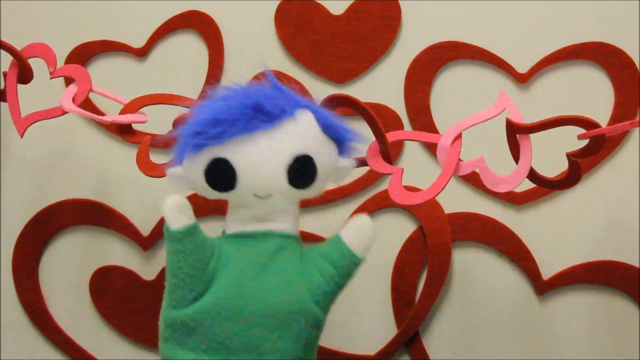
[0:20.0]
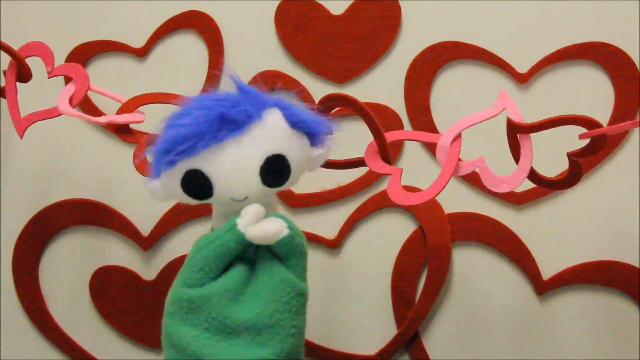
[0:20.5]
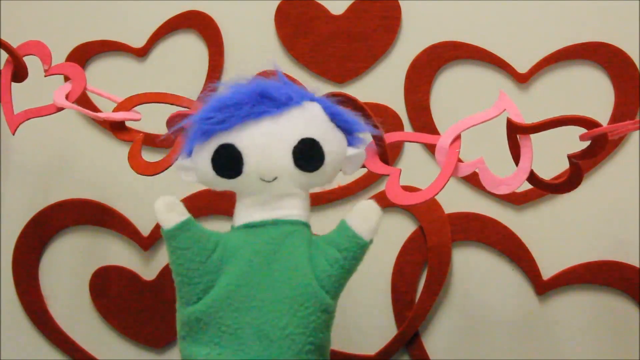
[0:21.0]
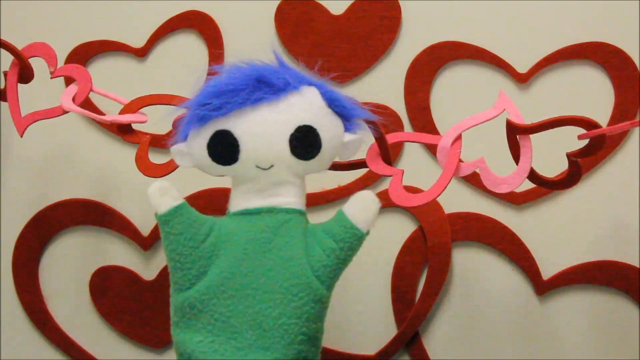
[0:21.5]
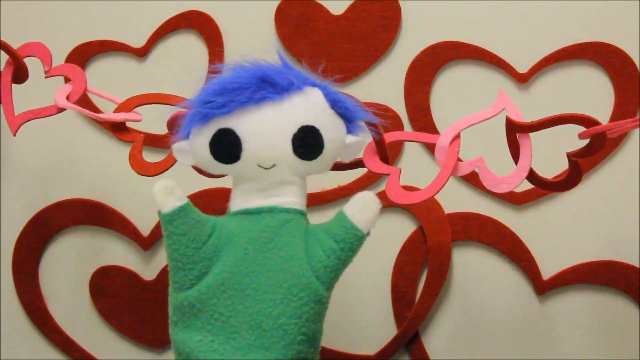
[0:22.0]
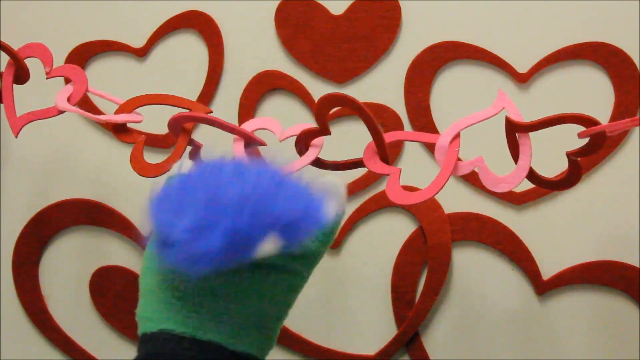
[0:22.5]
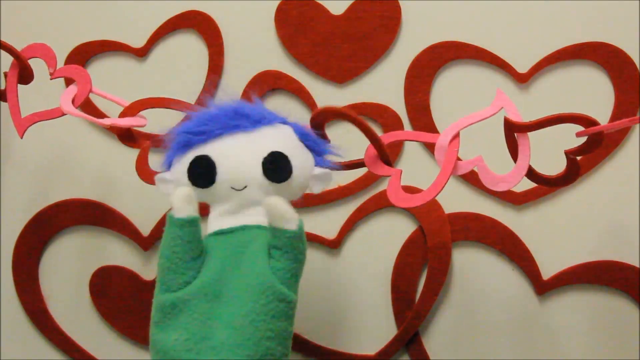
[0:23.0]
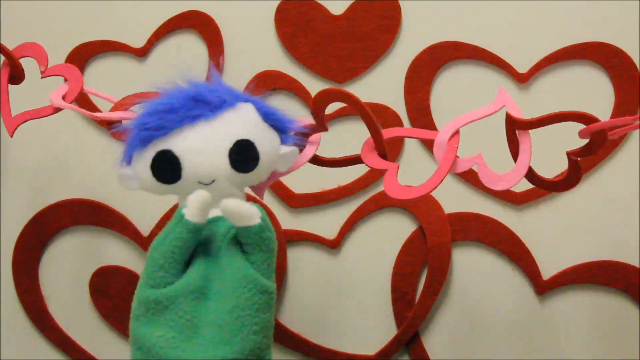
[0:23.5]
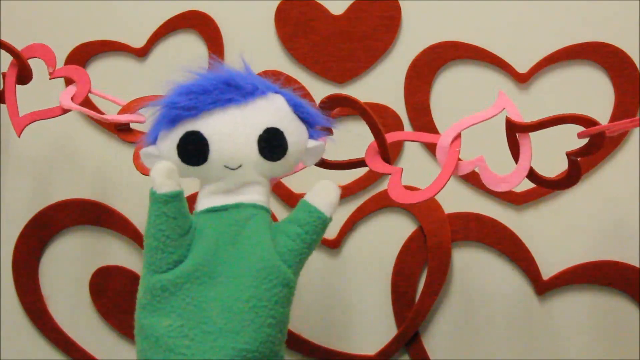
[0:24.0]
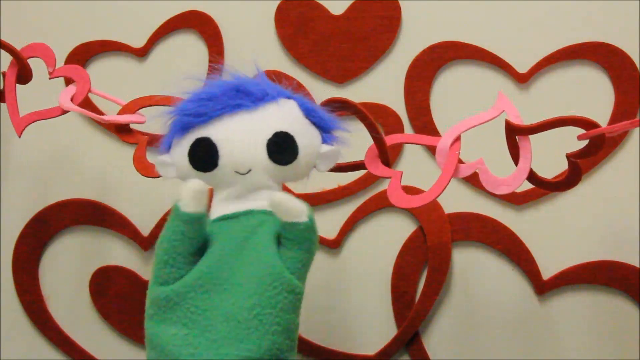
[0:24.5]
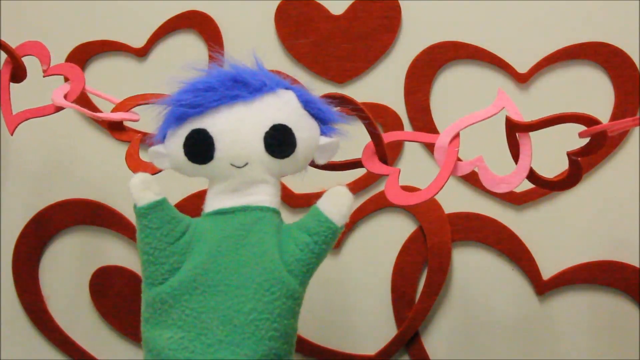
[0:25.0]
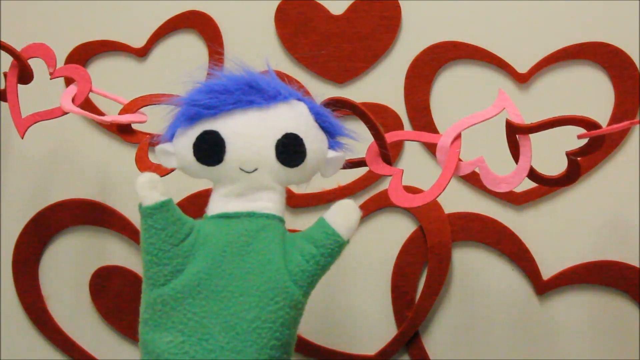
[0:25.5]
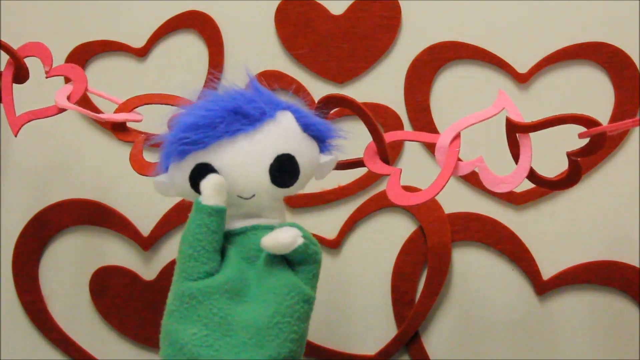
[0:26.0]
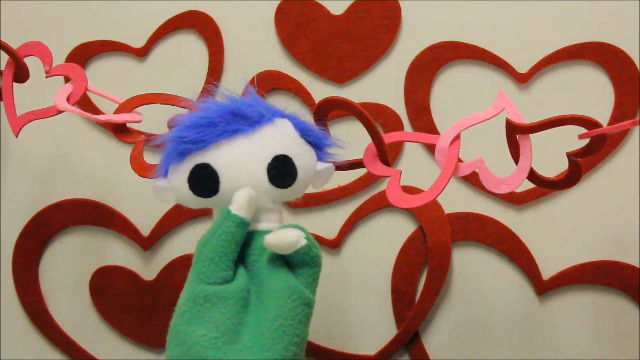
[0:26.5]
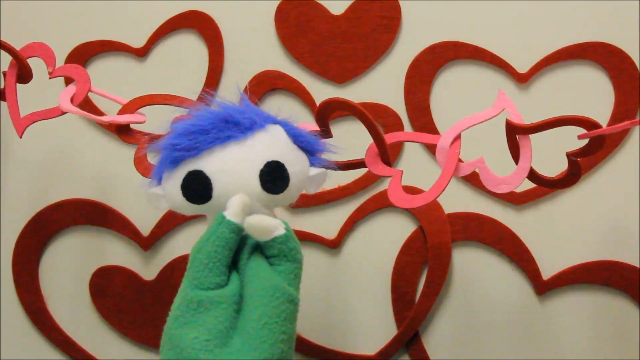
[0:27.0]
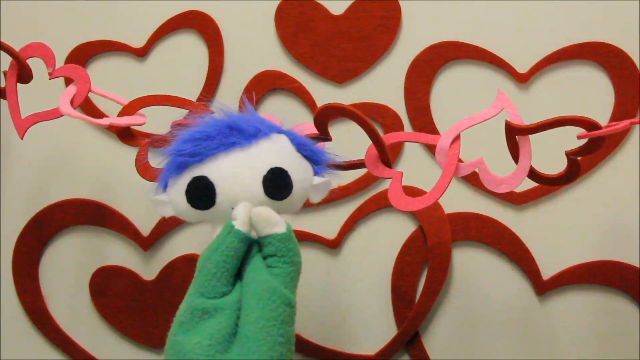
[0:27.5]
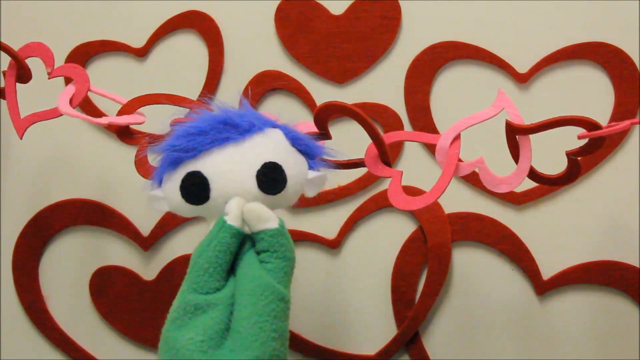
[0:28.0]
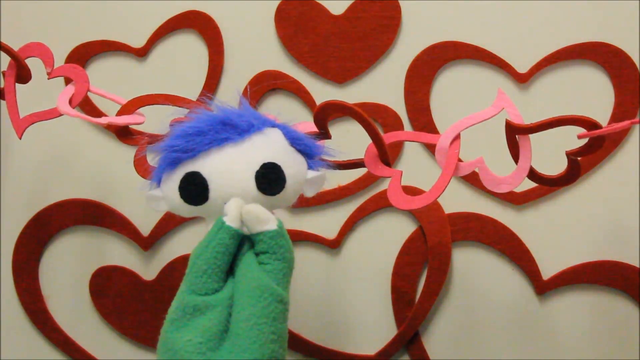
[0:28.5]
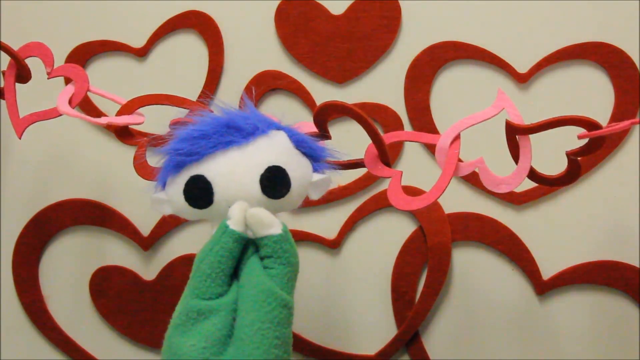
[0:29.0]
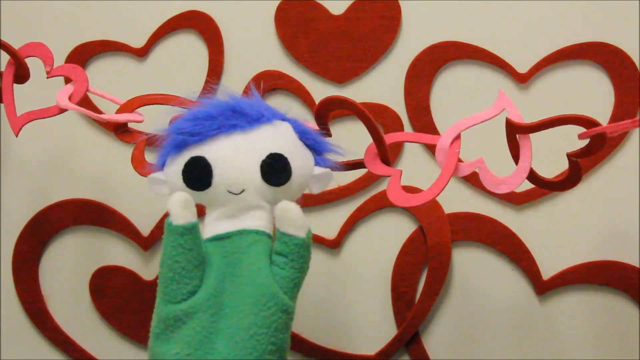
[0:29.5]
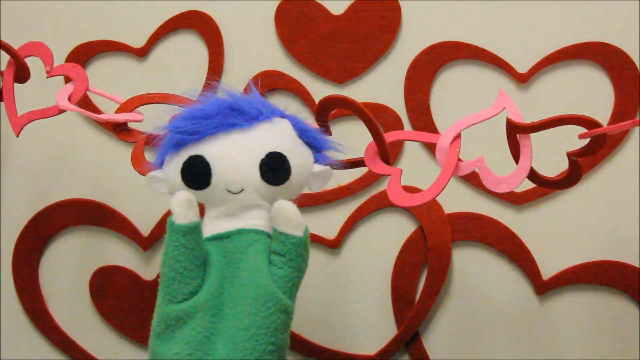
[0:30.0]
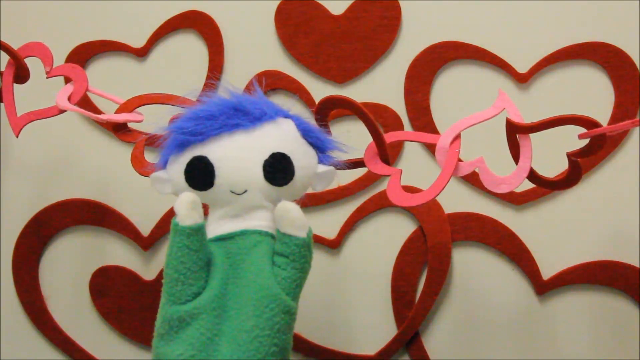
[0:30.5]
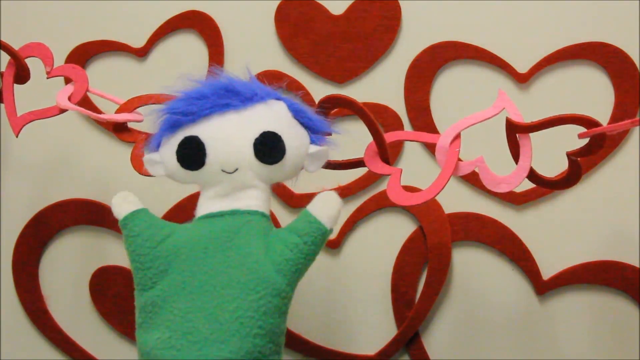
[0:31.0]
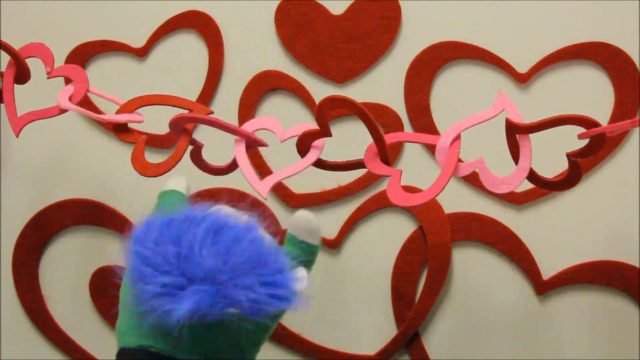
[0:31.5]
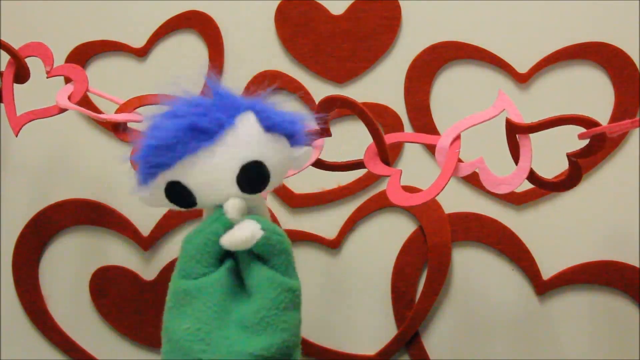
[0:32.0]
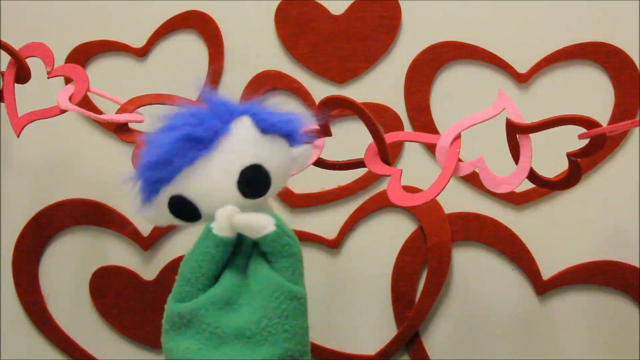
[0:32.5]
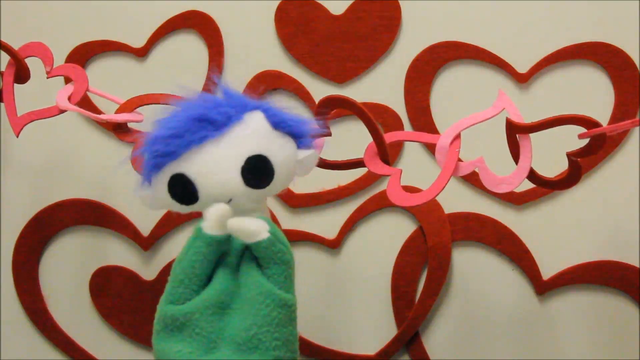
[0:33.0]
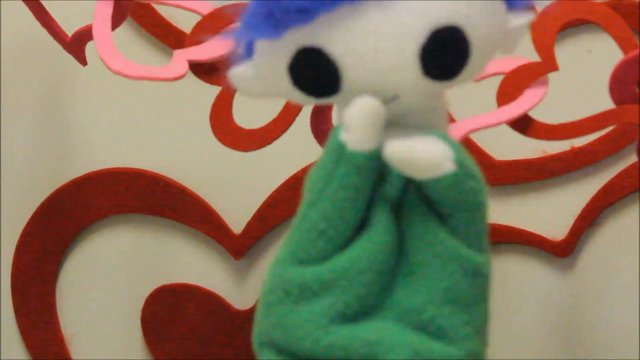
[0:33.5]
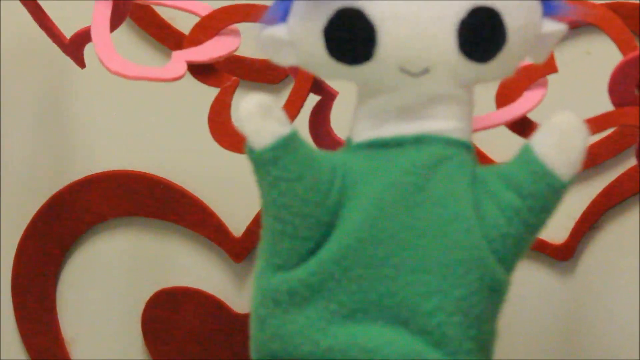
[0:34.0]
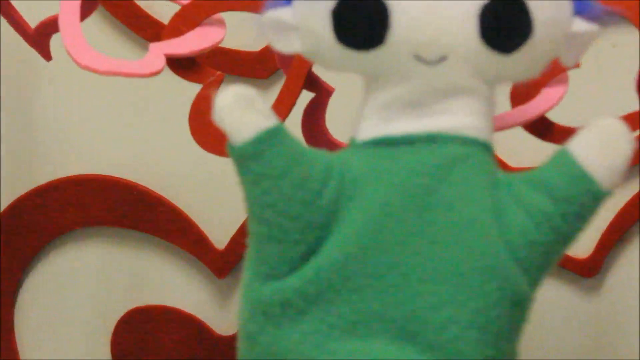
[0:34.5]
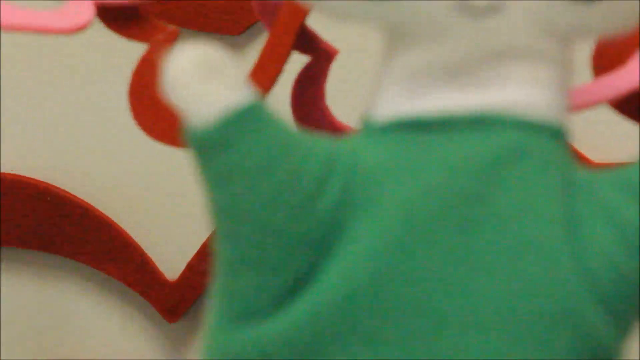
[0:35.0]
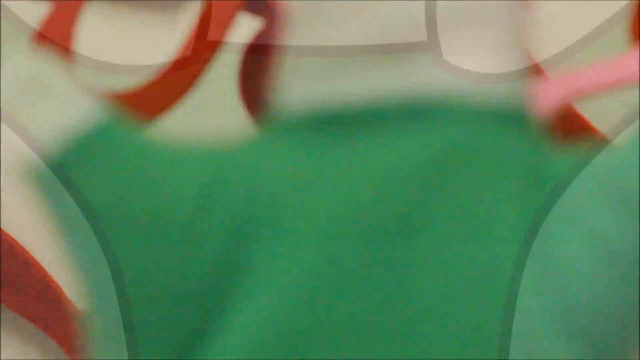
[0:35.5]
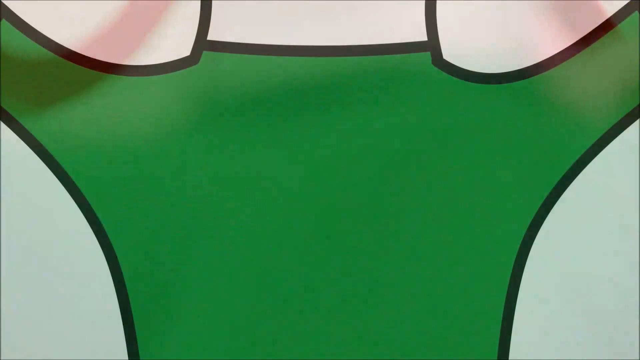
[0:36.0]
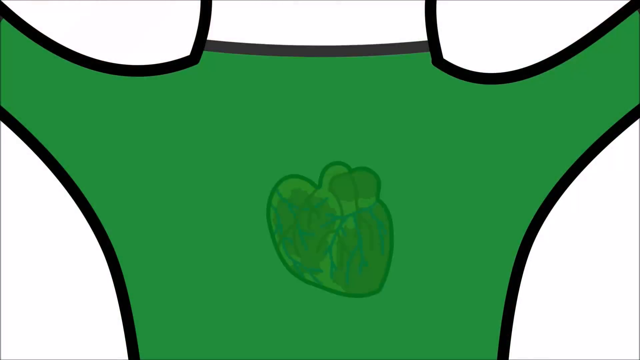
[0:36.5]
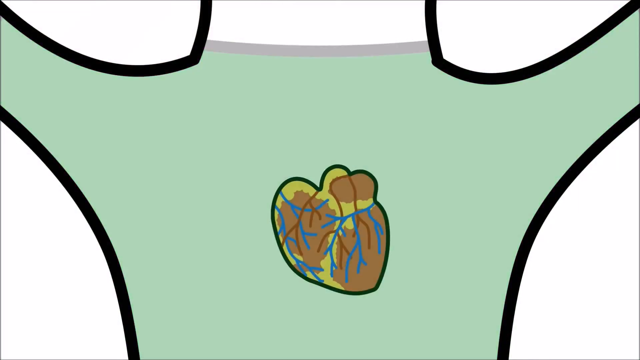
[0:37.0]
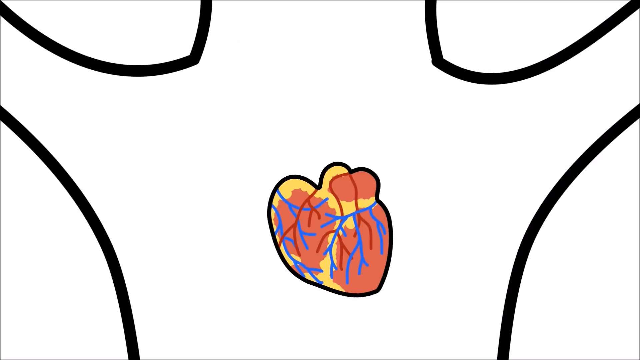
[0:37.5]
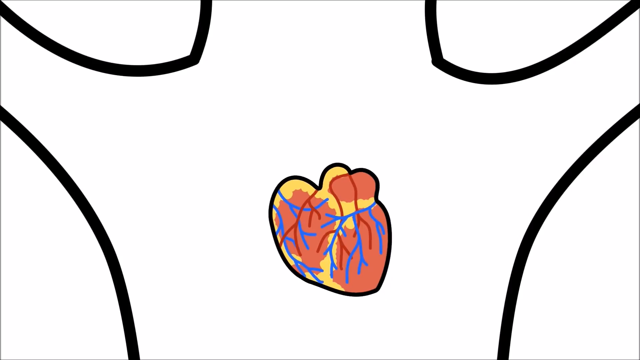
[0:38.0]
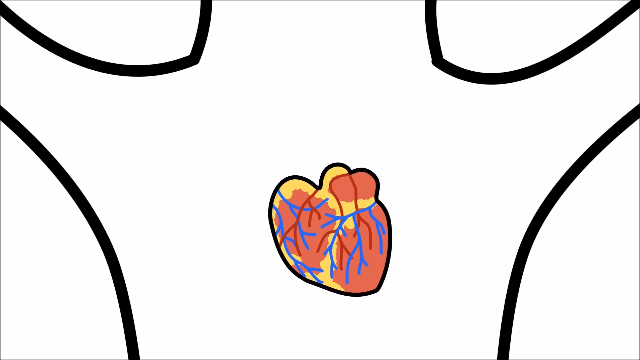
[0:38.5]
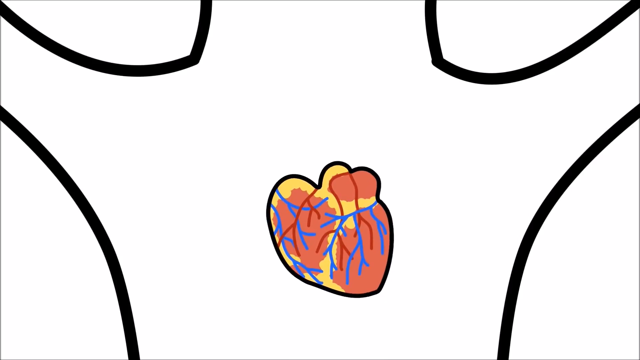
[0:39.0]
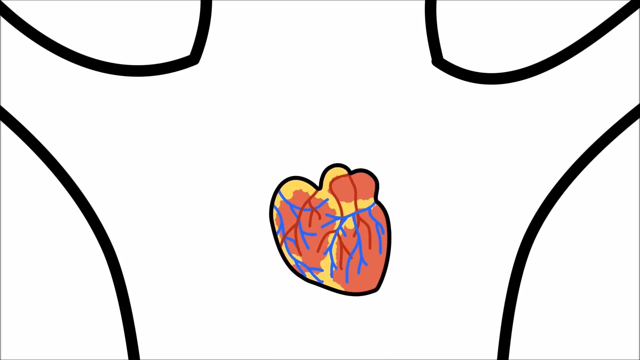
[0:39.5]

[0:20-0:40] A hand puppet with blue hair, big black eyes and a small, fat smile wears a green sweater. Behind him is a heart chain made of different colored hearts, some red and some pink, and behind that are cut-out hearts, some solid and some hearts inside of hearts. The puppet acts pretty excited: he puts his hands together and kind of drops his face. At one point he puts one hand over his mouth, then the other hand over his mouth, then pulls them apart, and he looks like he is laughing or giggling. The shot then moves into a close-up of the puppet, and as it gets closer the live puppet is replaced by the cartoon of the puppet. In the close-up, the puppet's heart is visible, with blue vessels and red vessels, some yellow and a little bit of red in the heart, and blue and red vessels running everywhere. The heart then starts to beat.